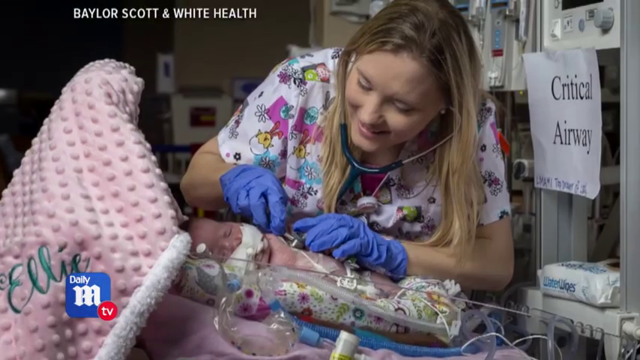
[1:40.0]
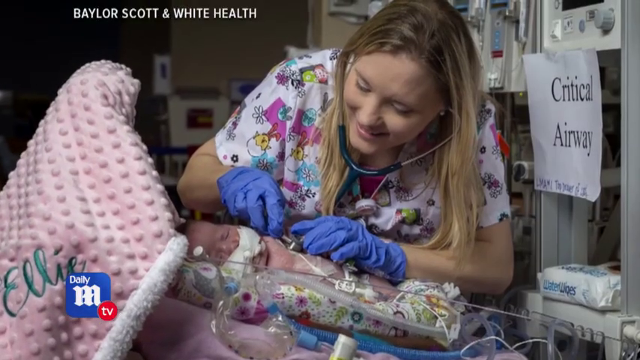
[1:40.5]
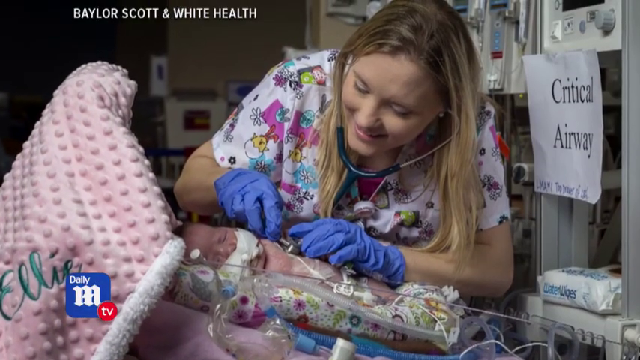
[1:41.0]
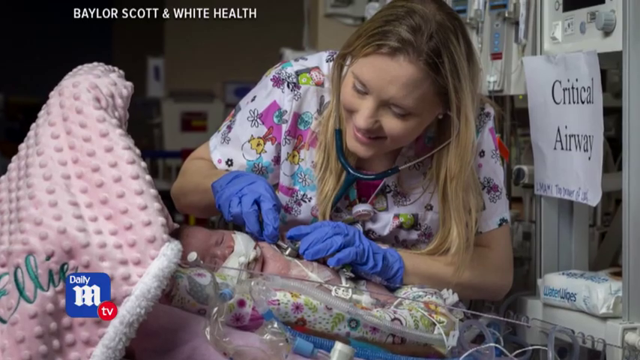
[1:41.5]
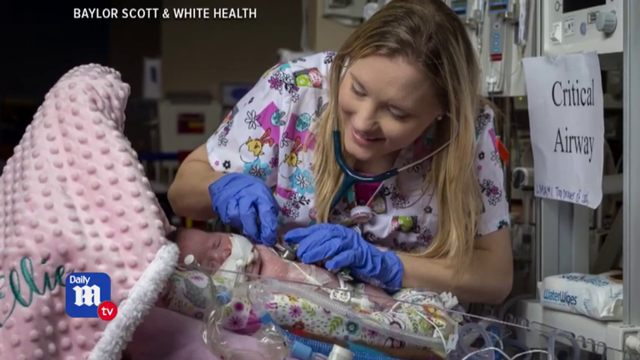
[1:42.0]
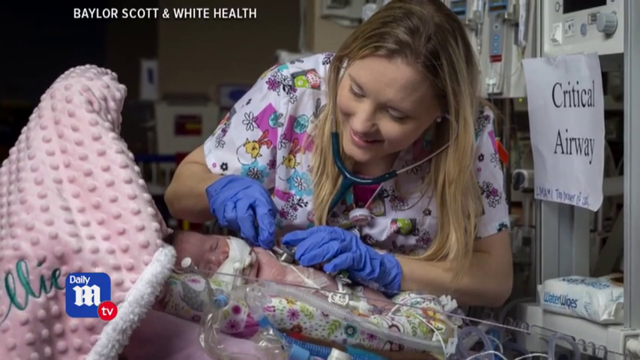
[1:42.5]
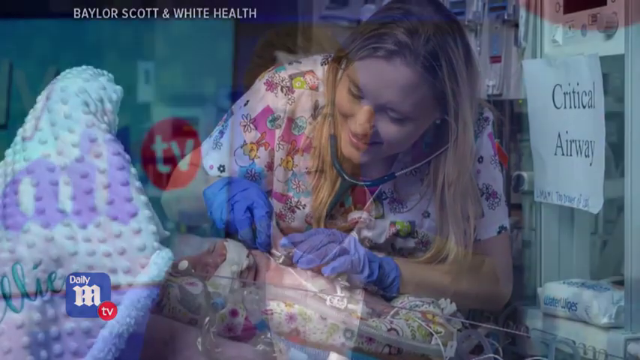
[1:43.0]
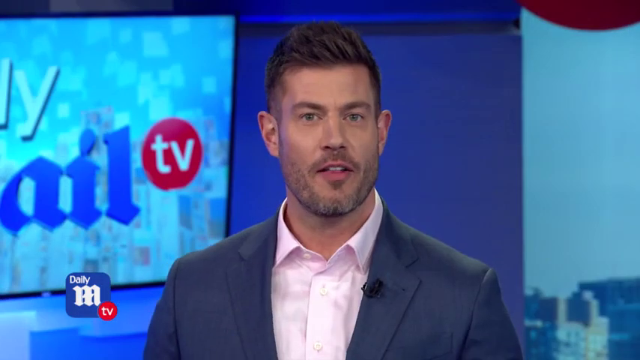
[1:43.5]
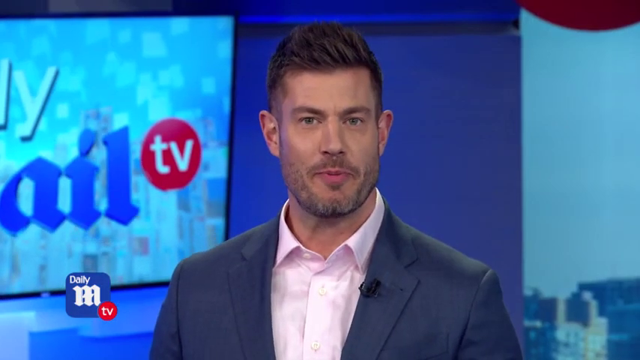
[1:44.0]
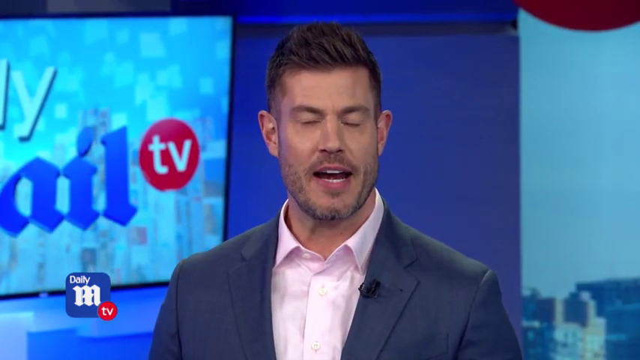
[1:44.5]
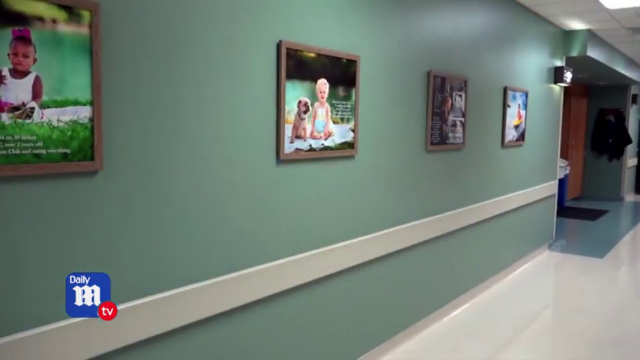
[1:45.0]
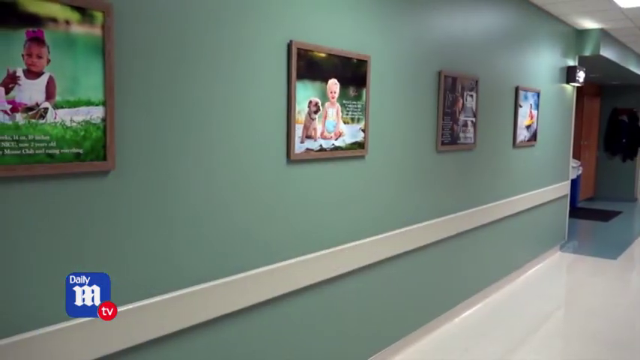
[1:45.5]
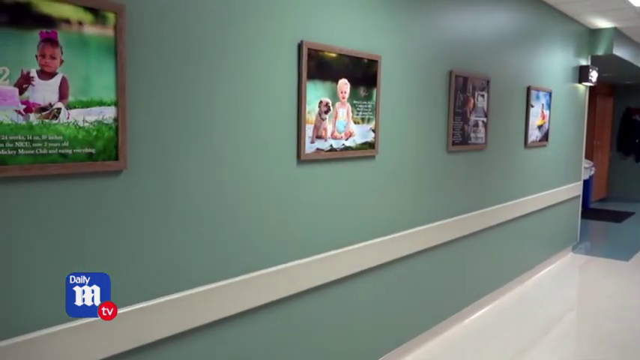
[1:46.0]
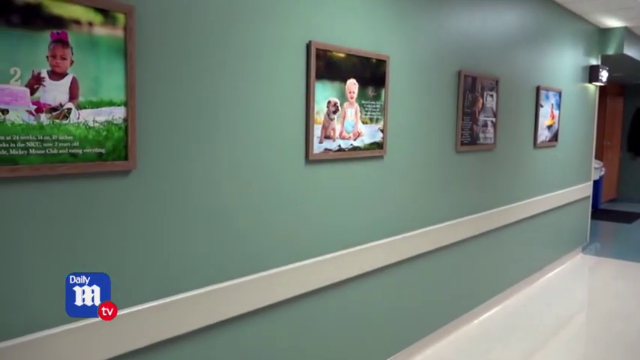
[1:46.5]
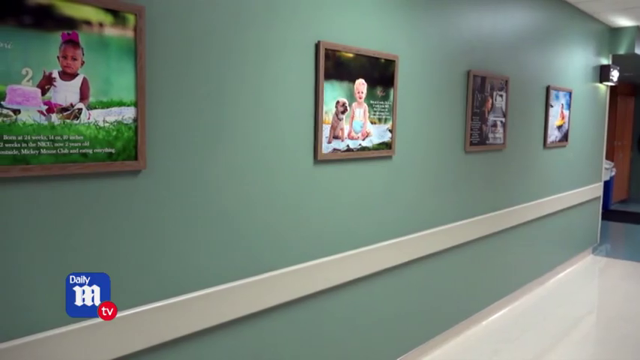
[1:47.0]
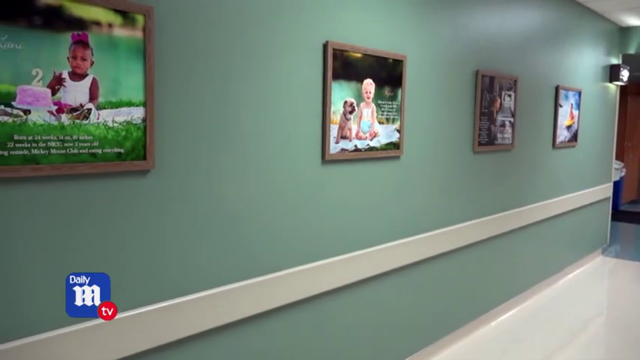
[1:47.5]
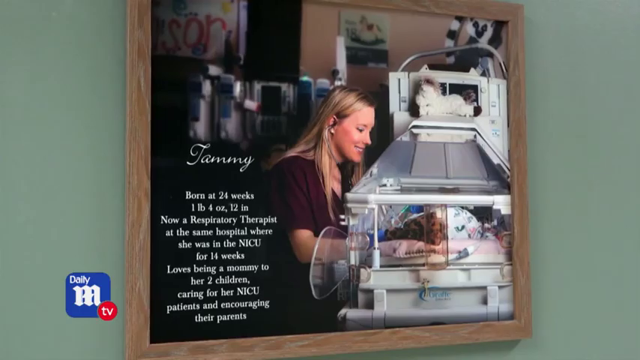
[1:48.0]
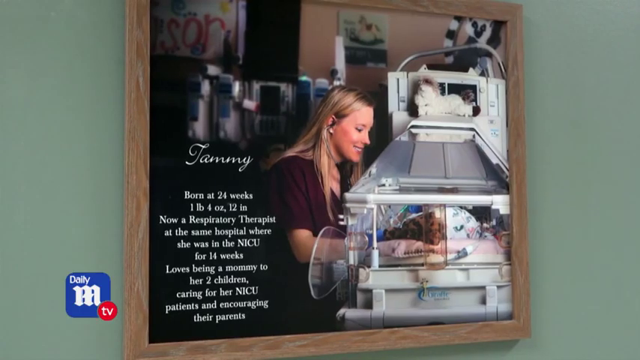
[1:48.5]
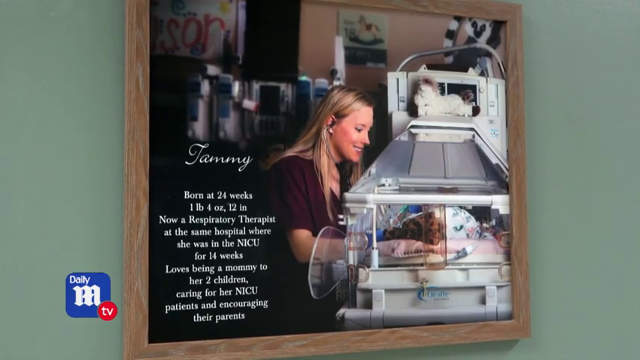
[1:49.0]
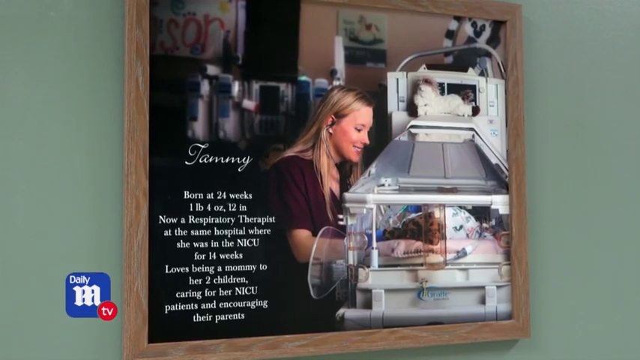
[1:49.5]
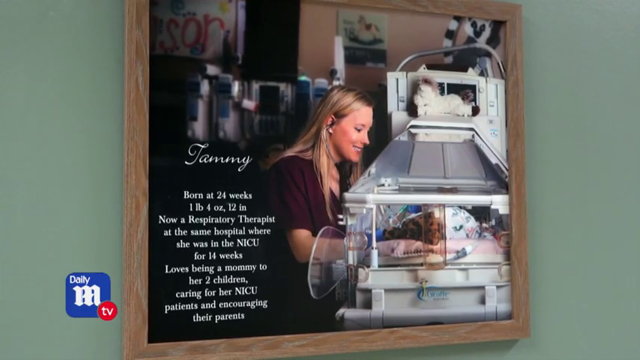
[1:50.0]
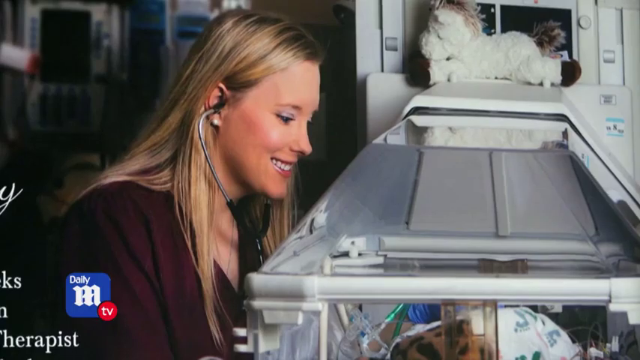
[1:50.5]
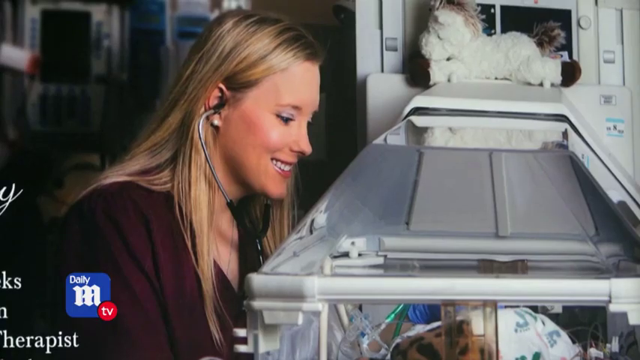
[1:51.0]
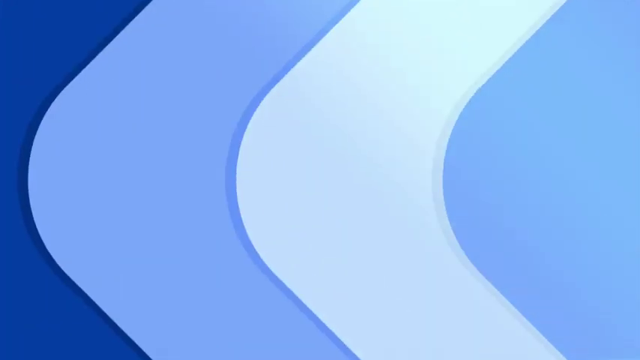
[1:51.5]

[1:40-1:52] Tammy holds a stethoscope to the heart of the child, with it in her ears, and seems to be listening to the heartbeat of the child, who is sleeping in the hospital bed. Next to it is written "critical airway". The video then returns to the presenter shown at the beginning, and then moves through a wall of images of different children in different situations, some in black and white. Finally, Tammy's image is shown framed on the wall, standing next to an incubator and wearing a maroon overall.